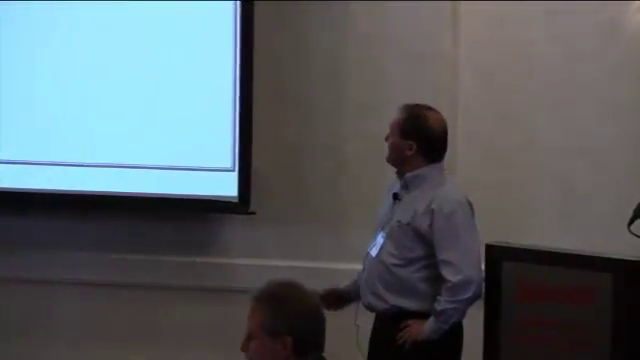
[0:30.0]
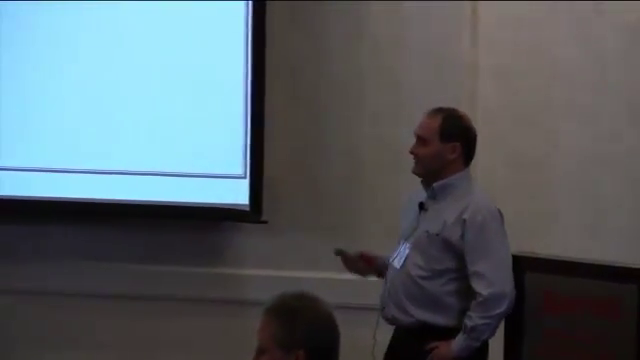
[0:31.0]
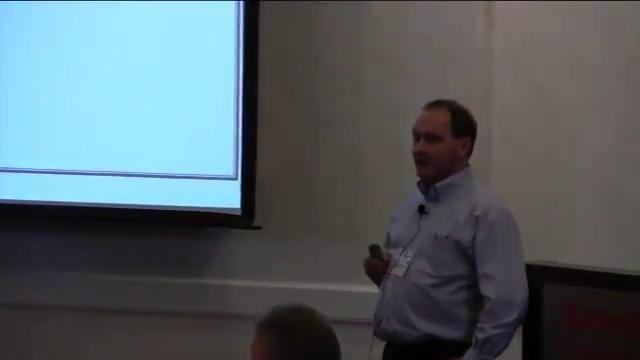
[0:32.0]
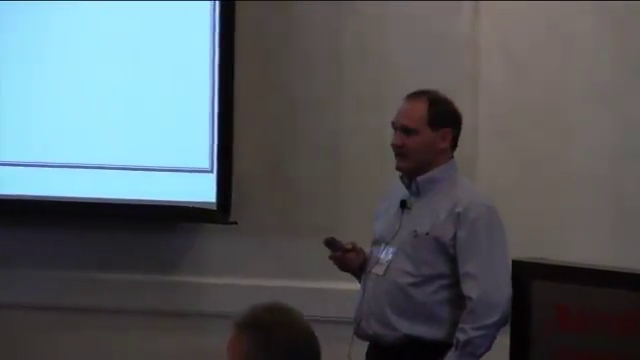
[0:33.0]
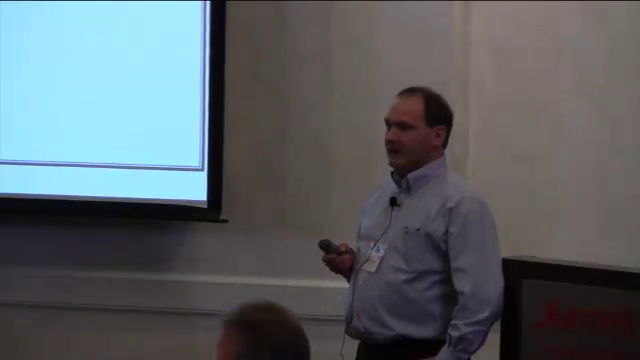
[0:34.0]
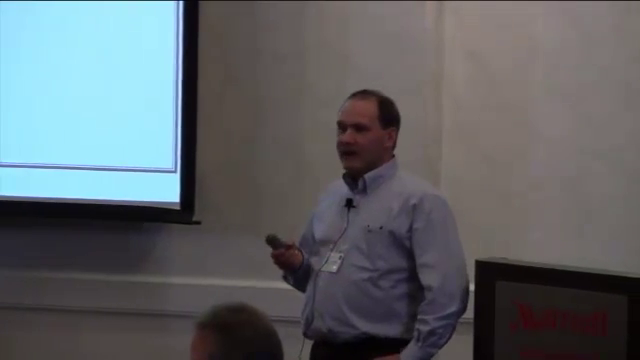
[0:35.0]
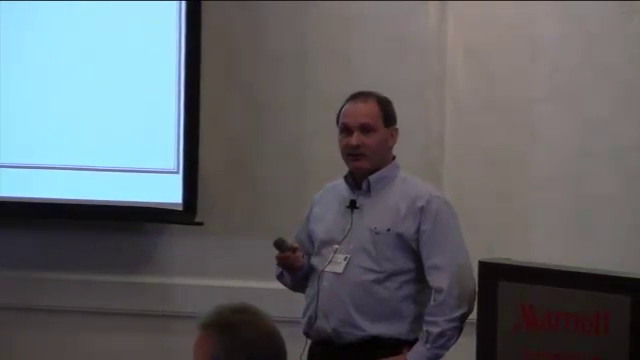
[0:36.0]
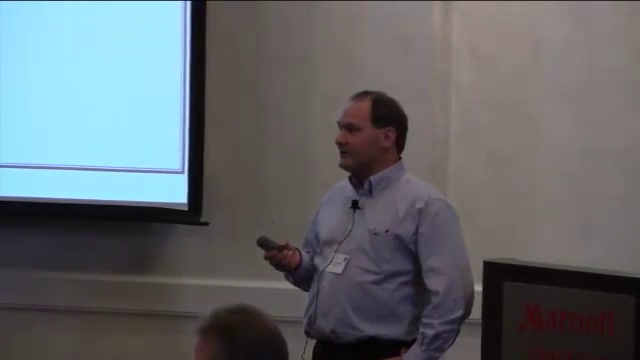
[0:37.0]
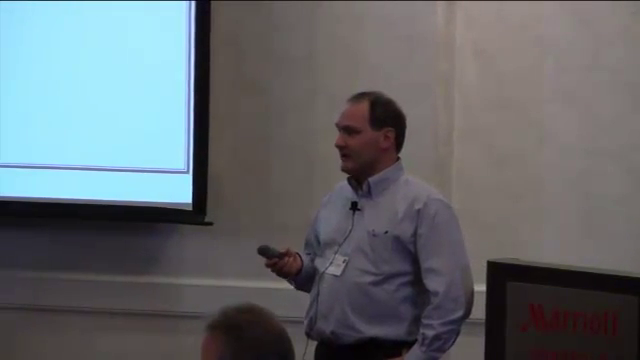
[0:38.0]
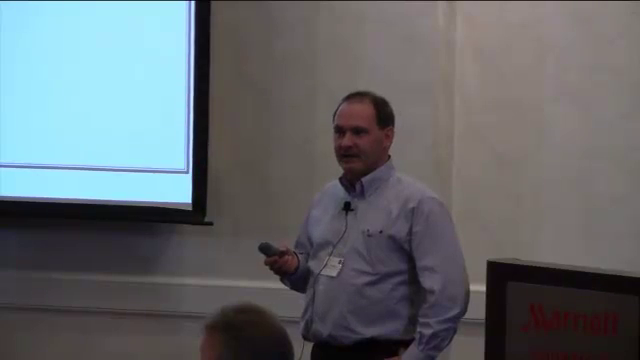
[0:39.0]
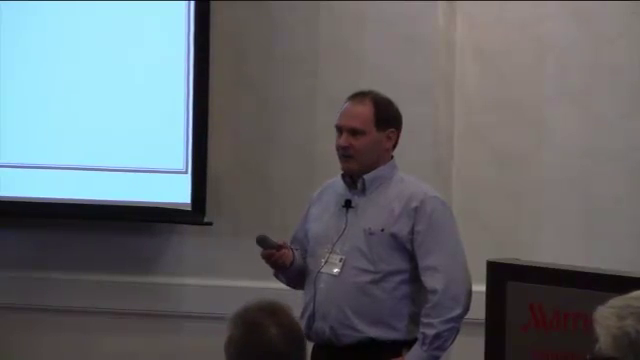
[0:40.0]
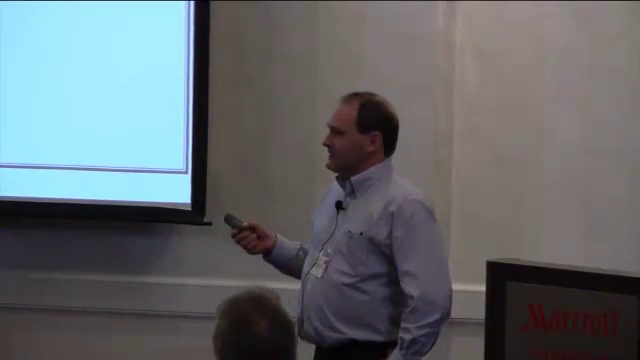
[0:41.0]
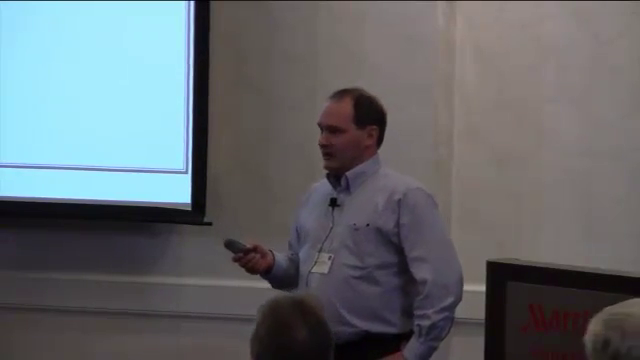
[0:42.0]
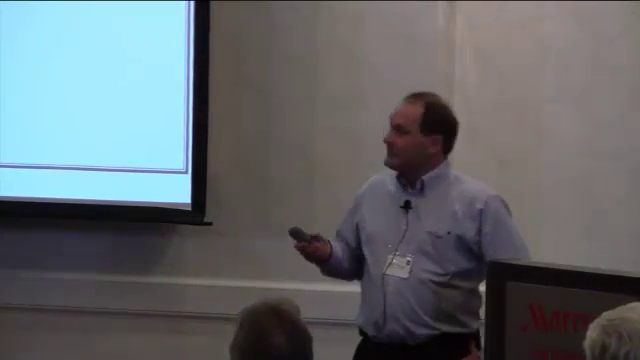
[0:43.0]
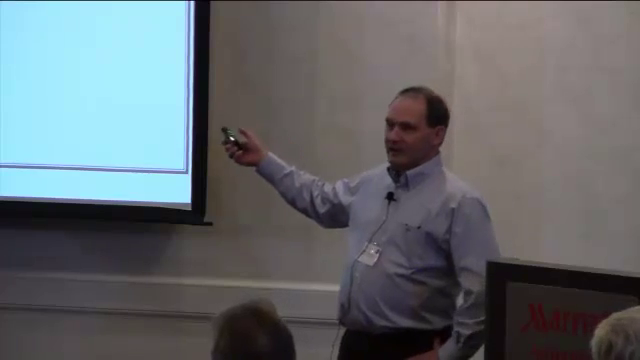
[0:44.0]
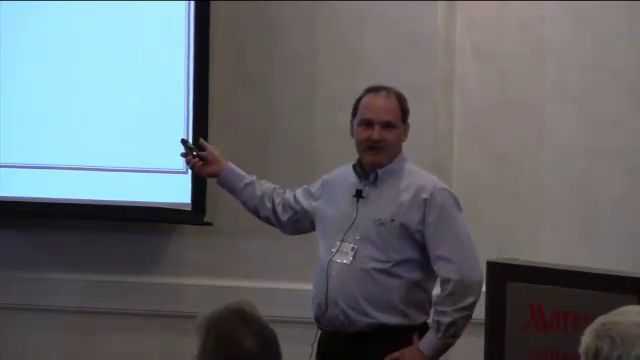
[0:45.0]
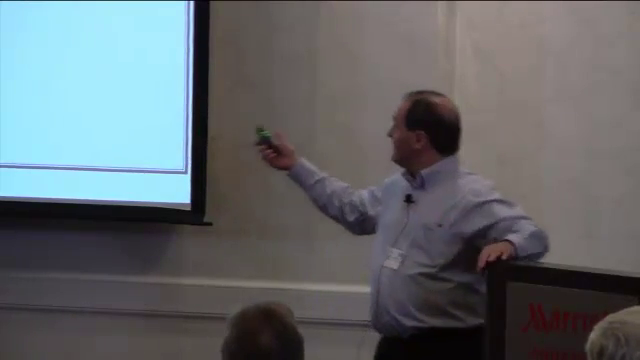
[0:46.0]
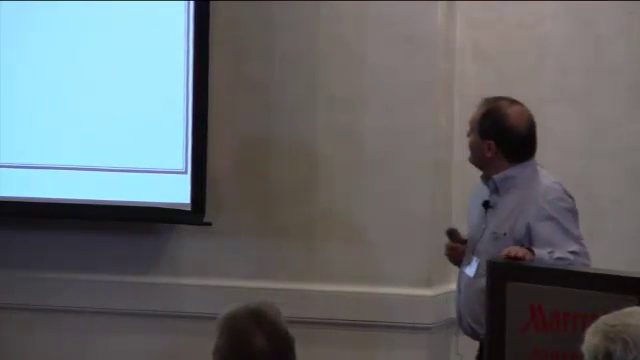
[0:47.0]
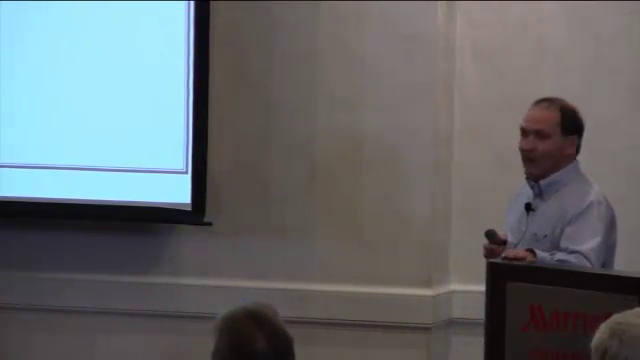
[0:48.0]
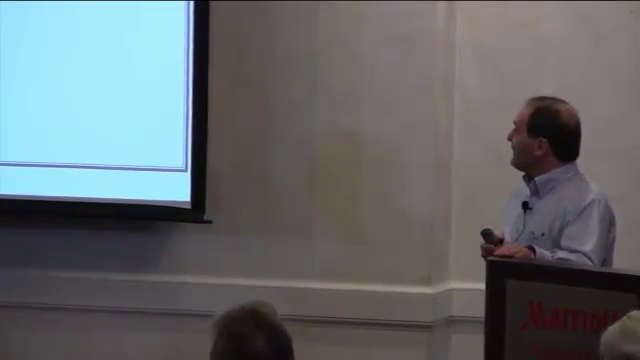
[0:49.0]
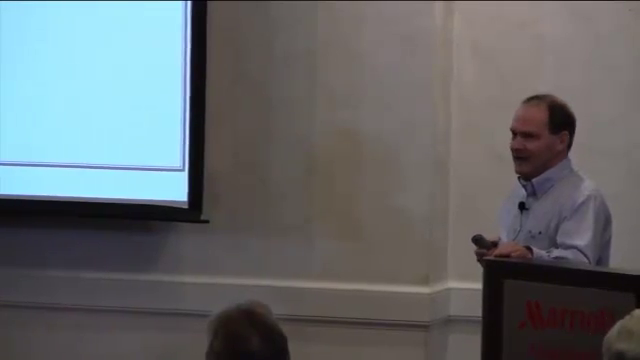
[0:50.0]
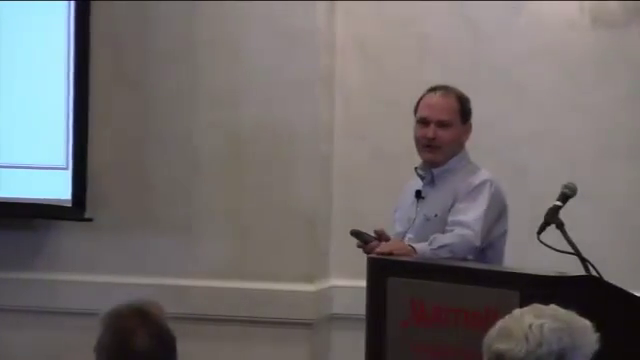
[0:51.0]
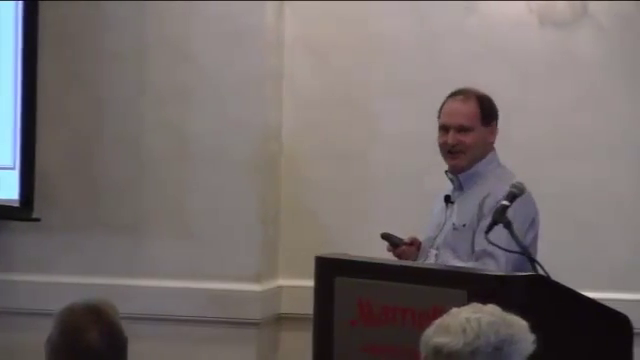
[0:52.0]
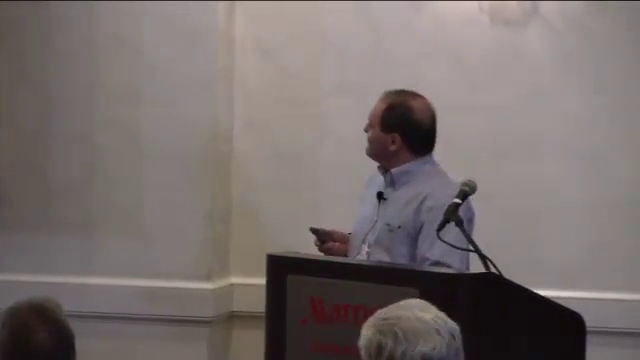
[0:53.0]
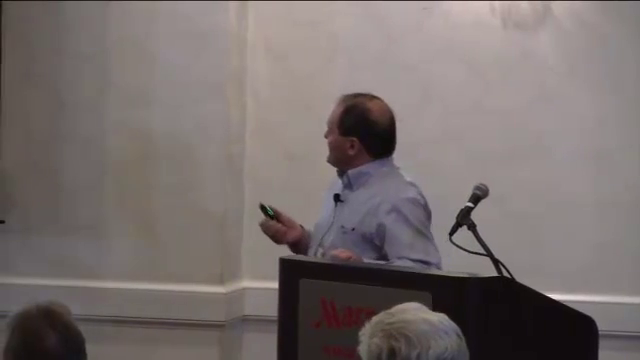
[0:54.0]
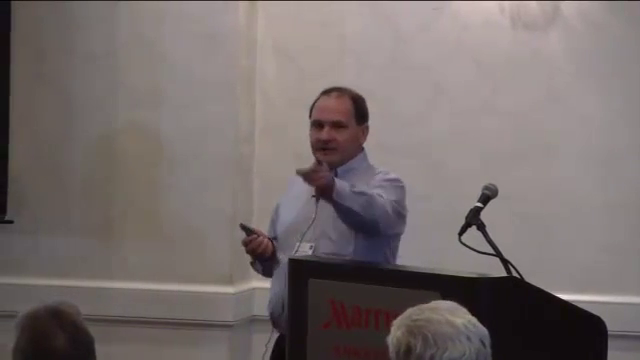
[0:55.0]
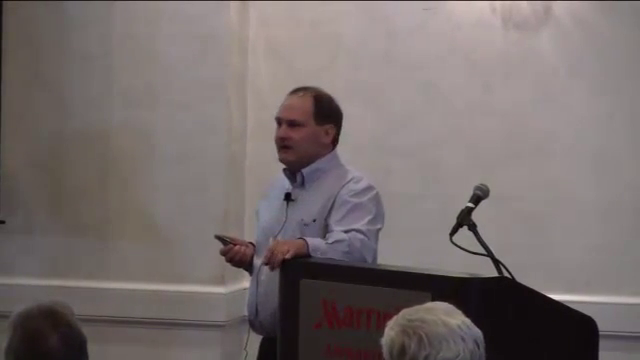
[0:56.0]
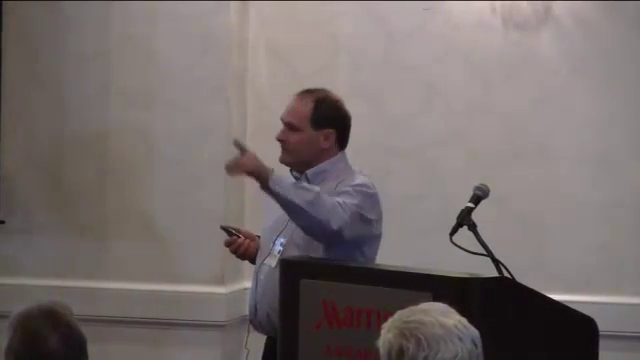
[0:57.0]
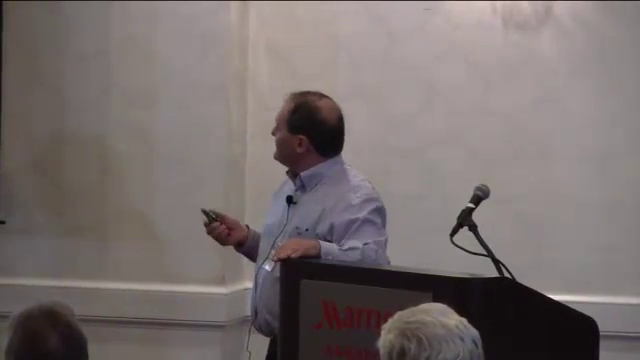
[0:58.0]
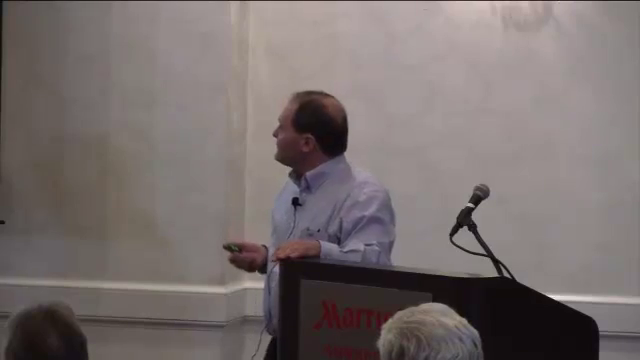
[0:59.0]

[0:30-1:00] The man stands to the left of the podium, his body facing the crowd while his head is turned to look at the large screen to his right. He has dark hair with a bald spot in the center of his head and wears a light-colored collared, long-sleeve button-down shirt, with a microphone clipped to the shirt around the second button and an ID badge clipped to his left chest. In his right hand he holds a remote to control the screen, which he points at with it. As he speaks to the people seated in front of him at dining tables, he gestures with the hand holding the remote. He steps back closer to the podium, rests his left hand on top of it, and turns his body slightly toward the screen, the remote still in his right hand. The camera angle moves away from the screen to just the man by the podium. He points out toward the crowd once, twice, and then a third time.